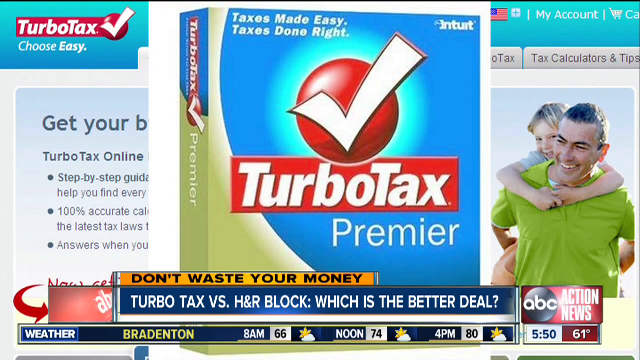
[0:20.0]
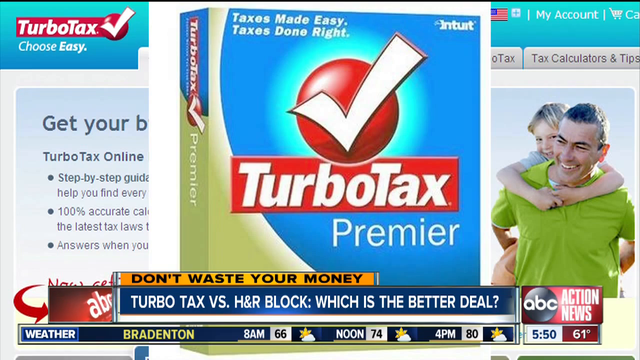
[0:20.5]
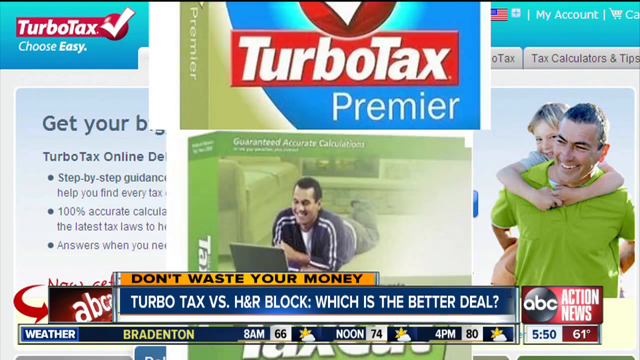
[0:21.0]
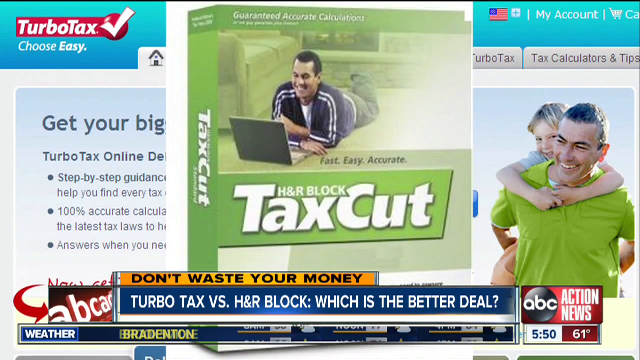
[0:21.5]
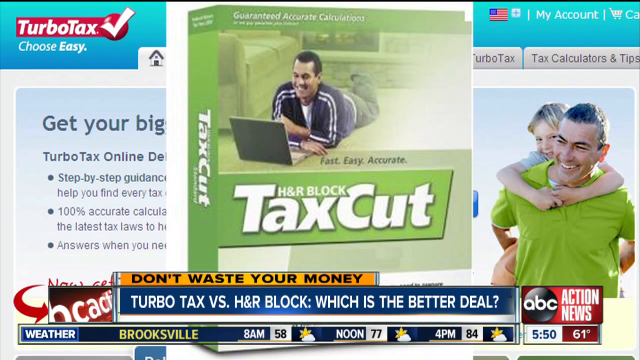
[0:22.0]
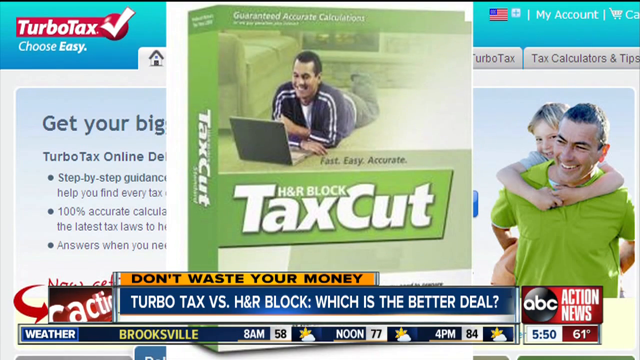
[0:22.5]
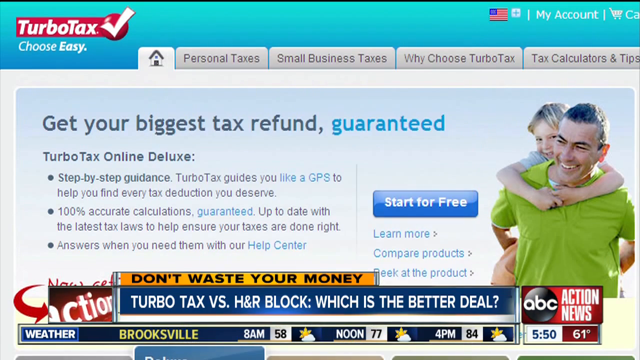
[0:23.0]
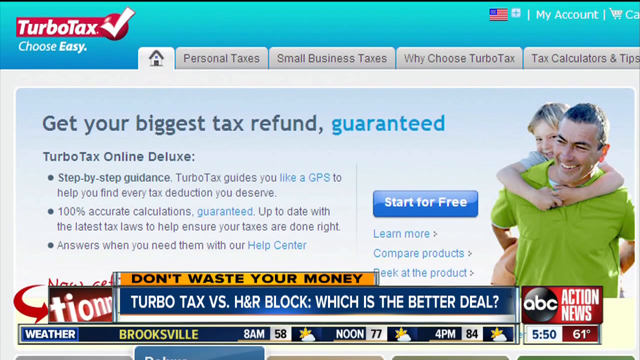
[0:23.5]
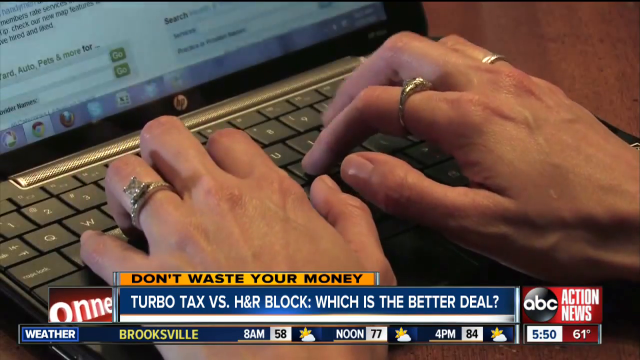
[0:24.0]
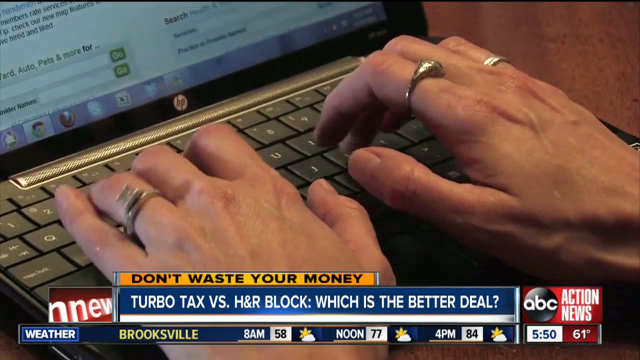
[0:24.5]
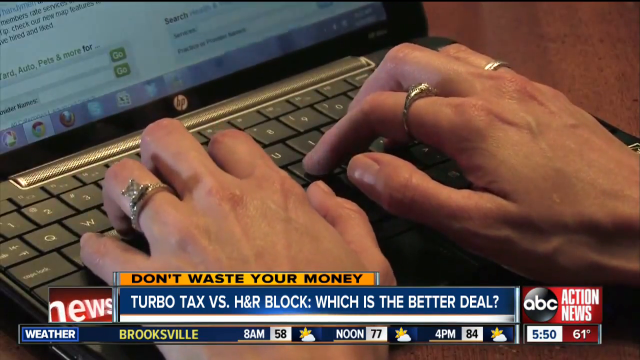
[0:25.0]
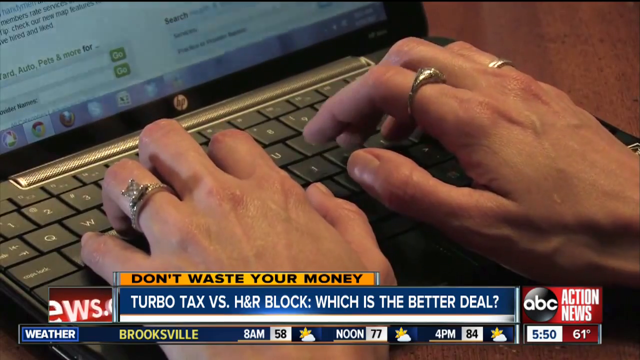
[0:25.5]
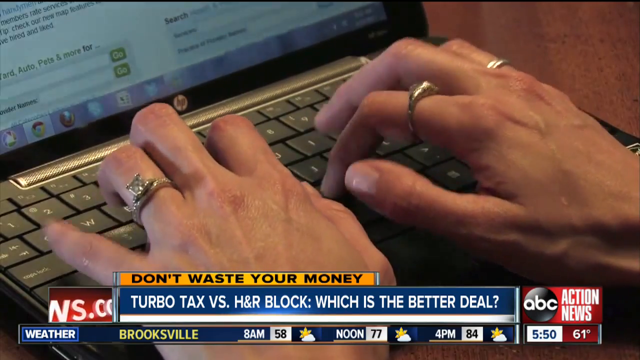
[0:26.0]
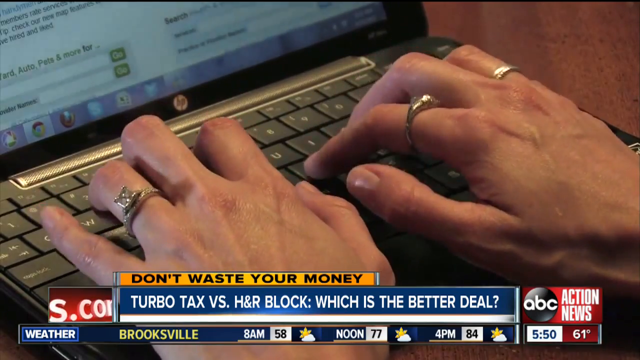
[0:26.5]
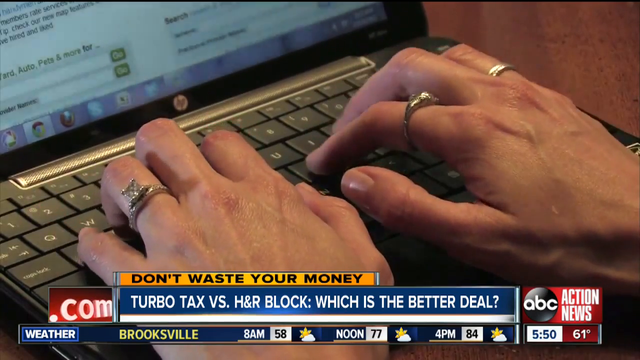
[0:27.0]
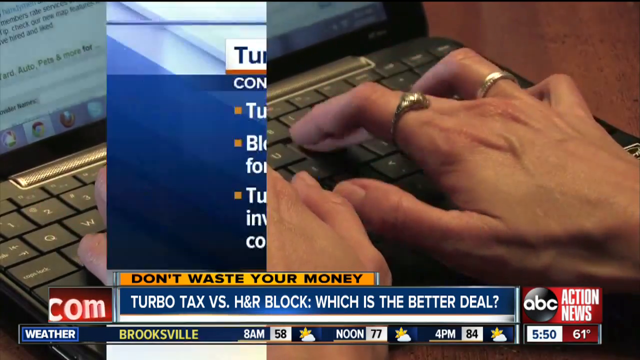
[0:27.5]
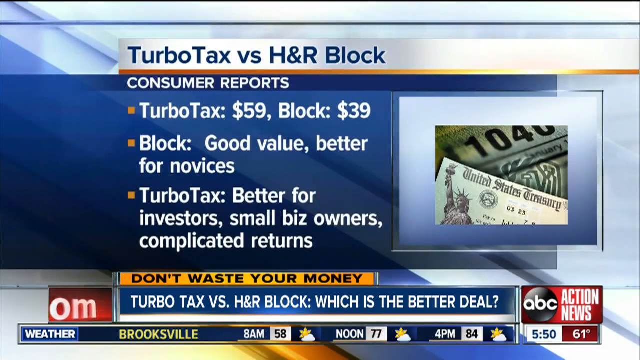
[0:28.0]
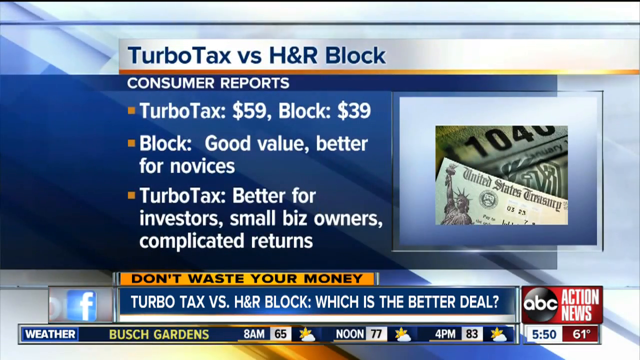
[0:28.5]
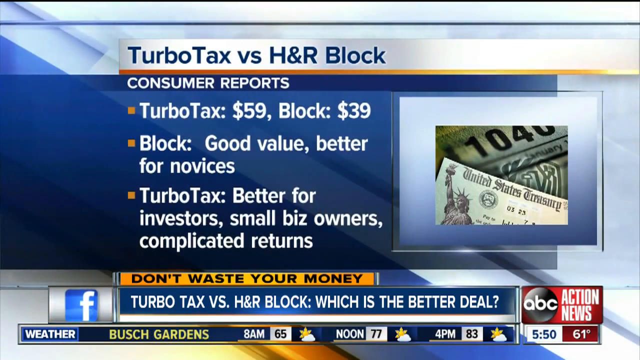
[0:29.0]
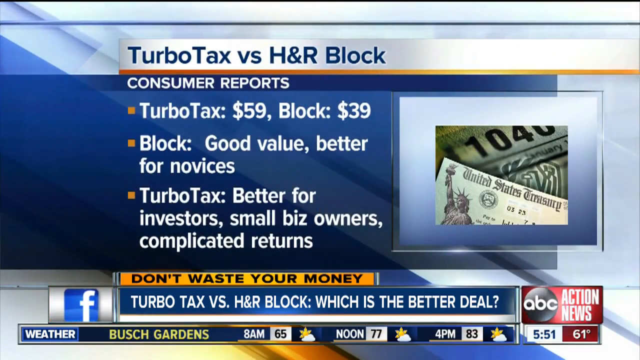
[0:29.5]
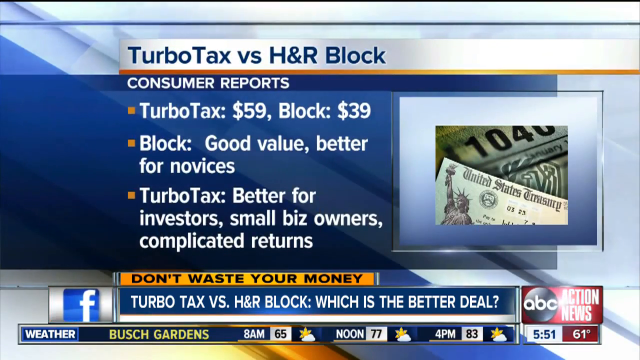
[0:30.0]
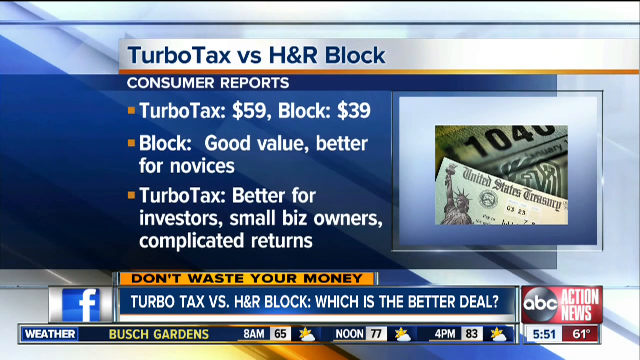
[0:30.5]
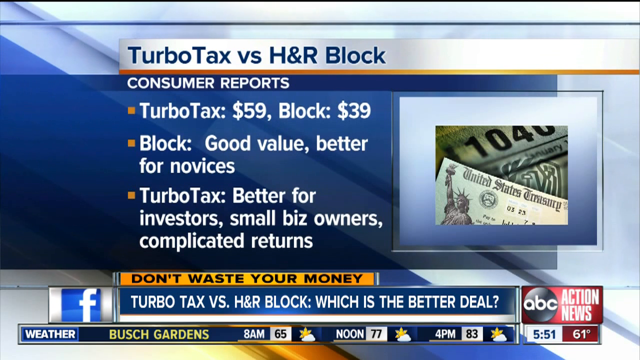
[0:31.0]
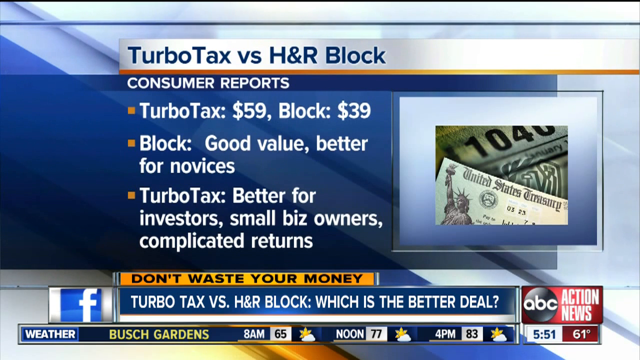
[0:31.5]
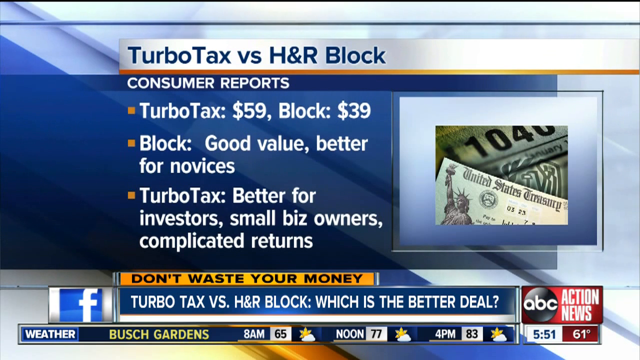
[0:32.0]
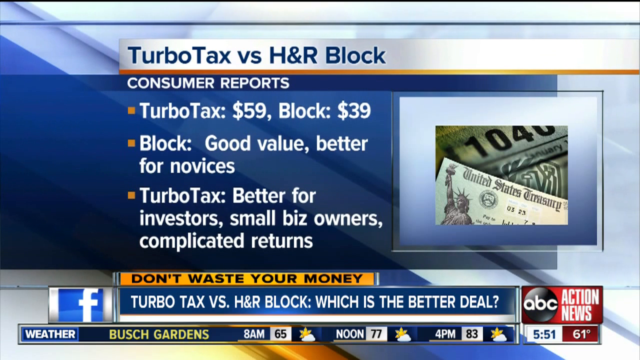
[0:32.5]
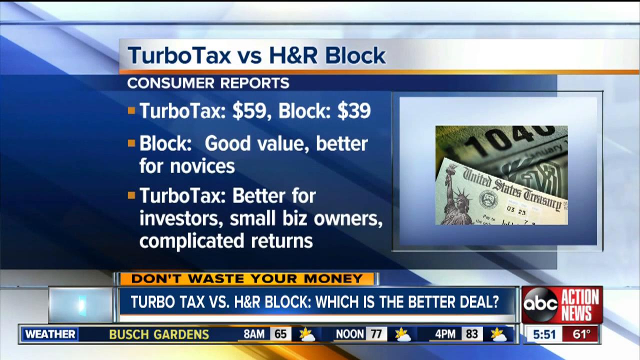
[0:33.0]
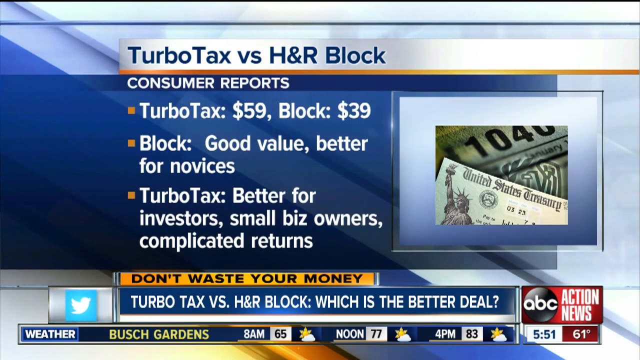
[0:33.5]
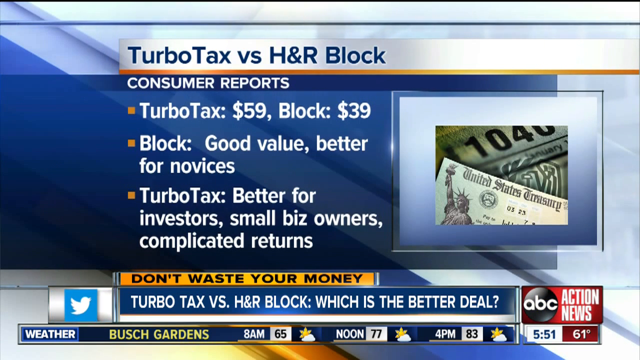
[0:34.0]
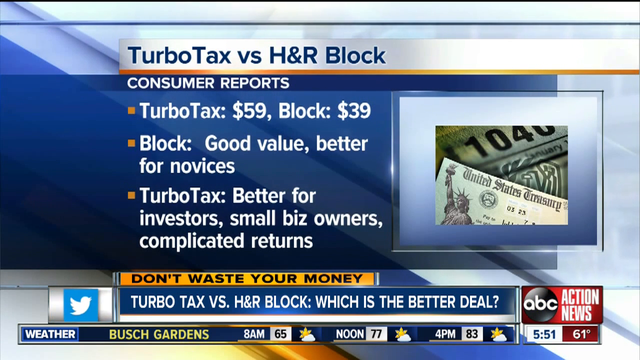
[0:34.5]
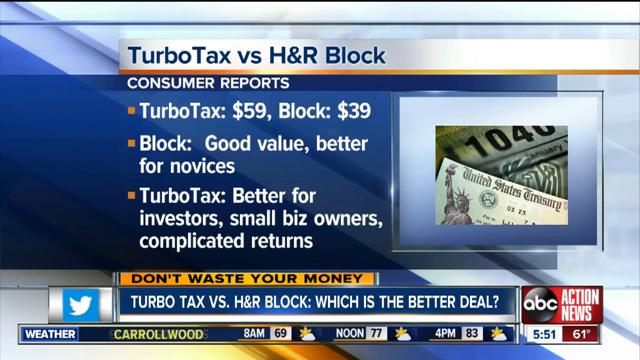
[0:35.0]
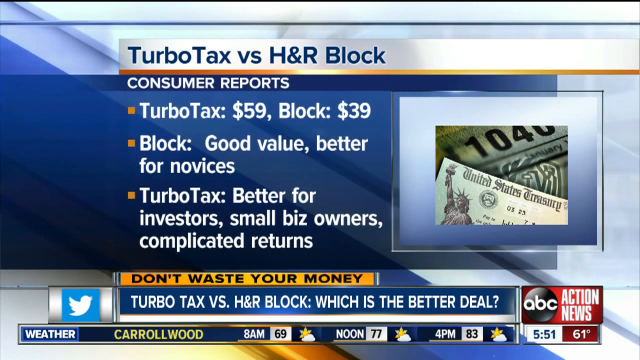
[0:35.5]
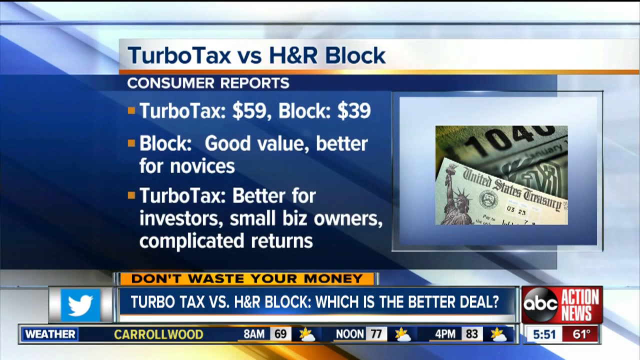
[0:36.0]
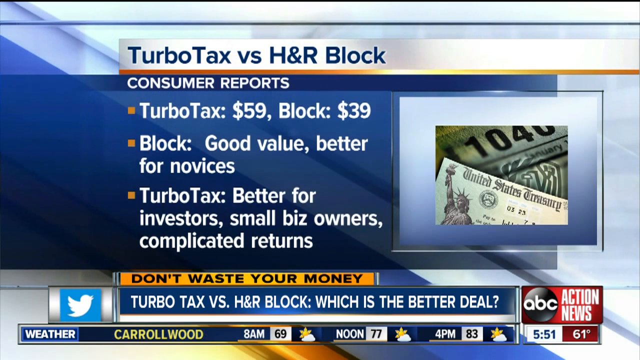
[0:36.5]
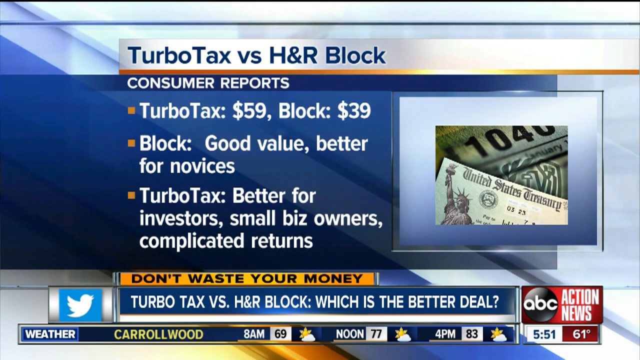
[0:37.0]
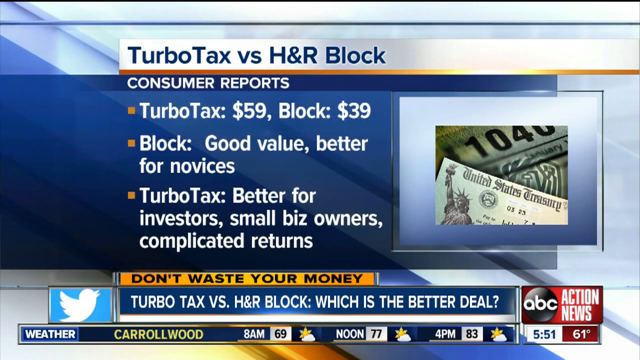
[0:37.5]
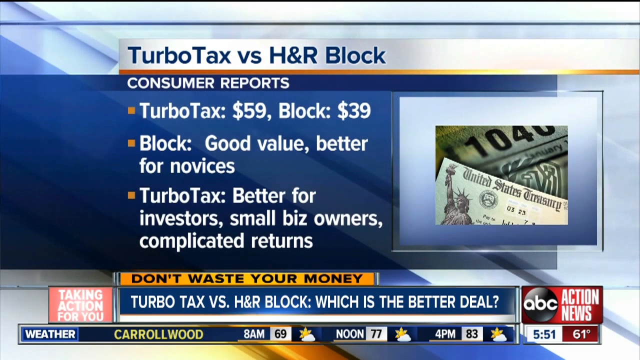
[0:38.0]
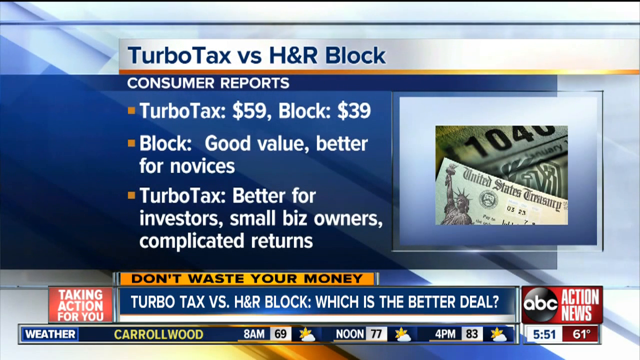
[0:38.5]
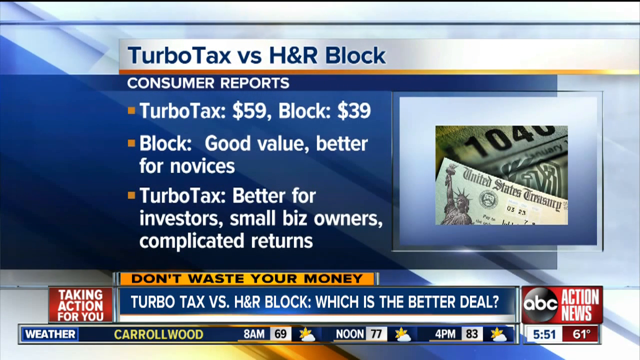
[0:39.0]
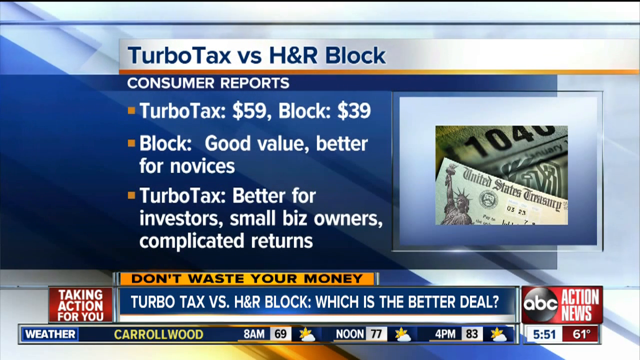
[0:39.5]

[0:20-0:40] The TurboTax background remains, and on top of it appears to be a box like the ones the TurboTax program used to be sold in. The bottom text still reads "don't waste your money TurboTax versus H&R Block, which is the better deal." Another box comes on, this one H&R Block tax cut, with the TurboTax website still in the background. The screen then switches to a laptop where a woman types using both hands; she has a ring on her wedding finger and two rings on the other hand. A PowerPoint screen comes on with the title "TurboTax versus H&R Block," under it "consumer reports," and then three bullet points: "TurboTax $59, Block 39, Block good value, better for novices, TurboTax better for investors, small biz owners, complicated returns." On the right is a picture of a check from the United States Treasury.